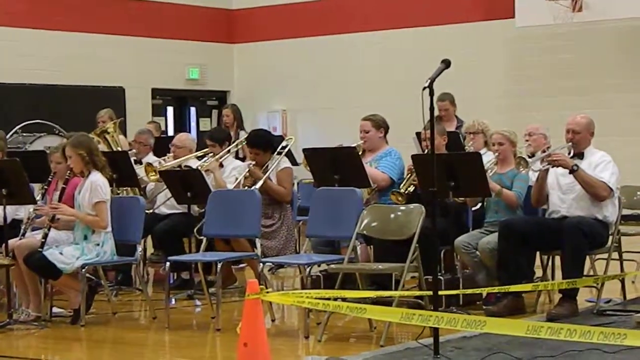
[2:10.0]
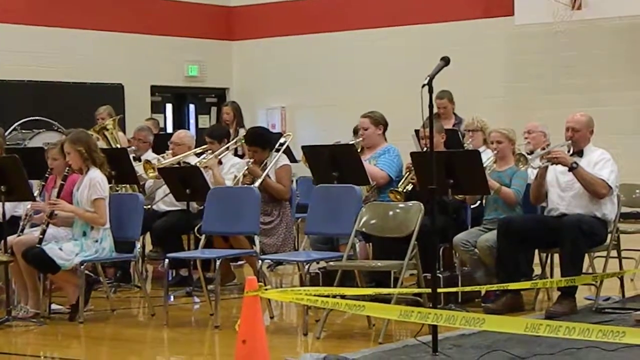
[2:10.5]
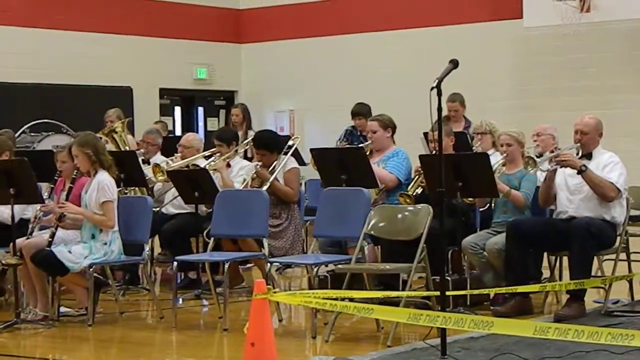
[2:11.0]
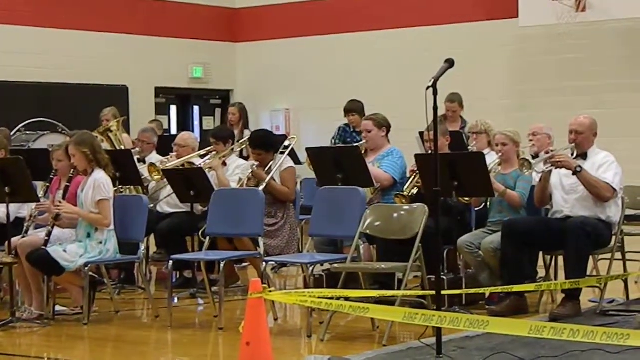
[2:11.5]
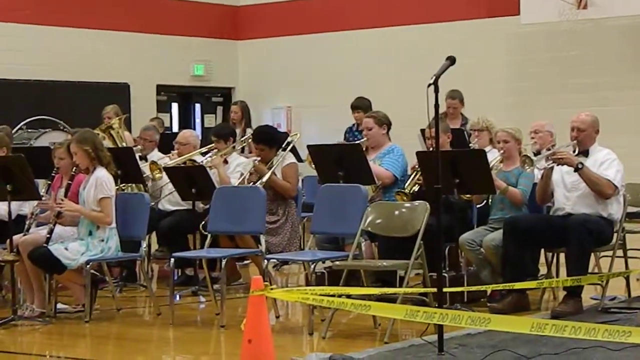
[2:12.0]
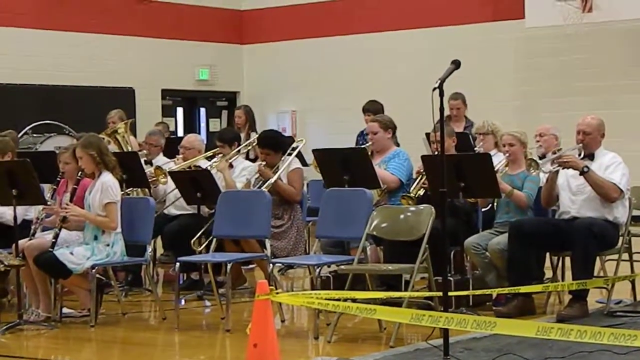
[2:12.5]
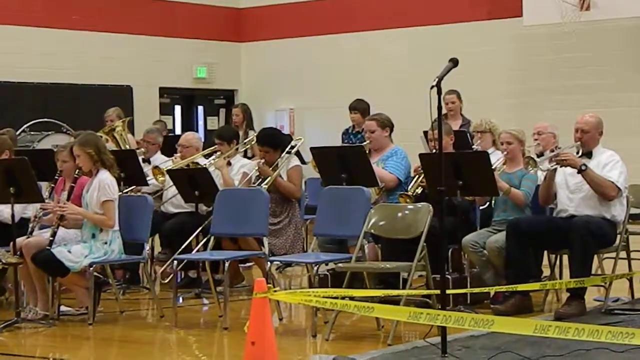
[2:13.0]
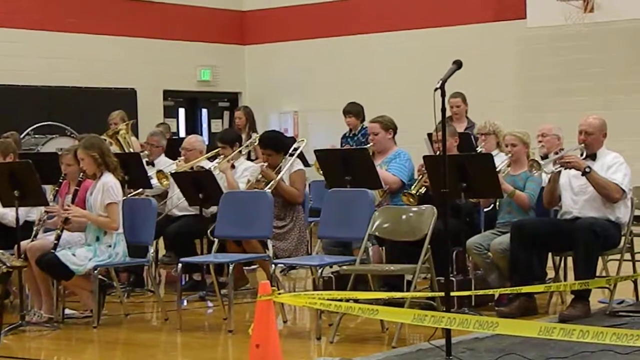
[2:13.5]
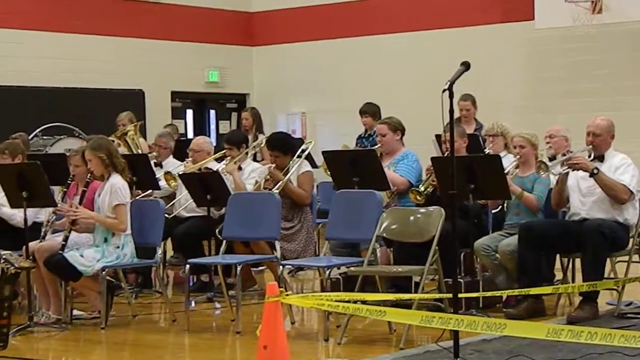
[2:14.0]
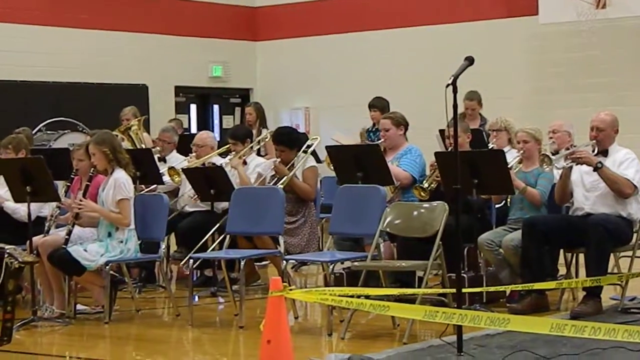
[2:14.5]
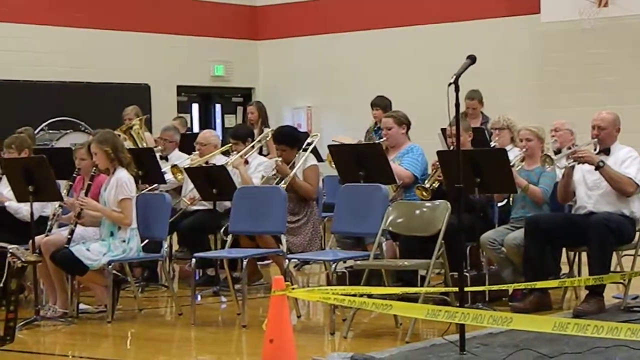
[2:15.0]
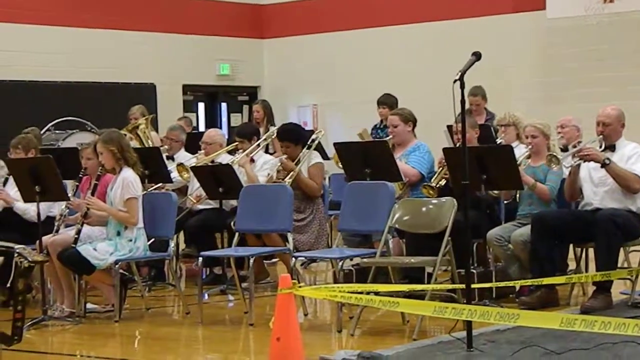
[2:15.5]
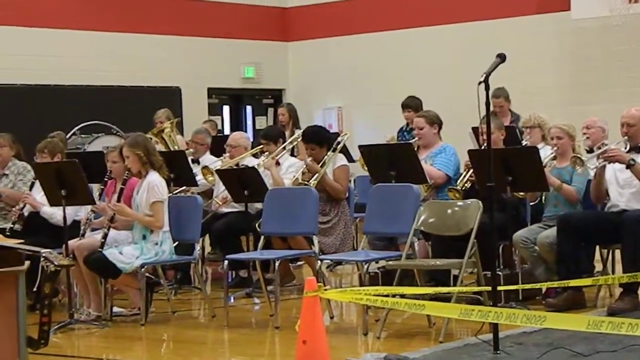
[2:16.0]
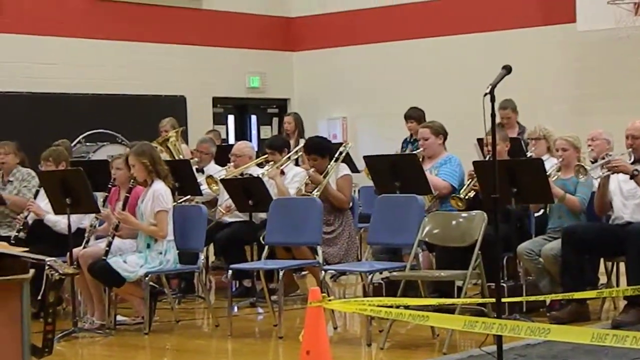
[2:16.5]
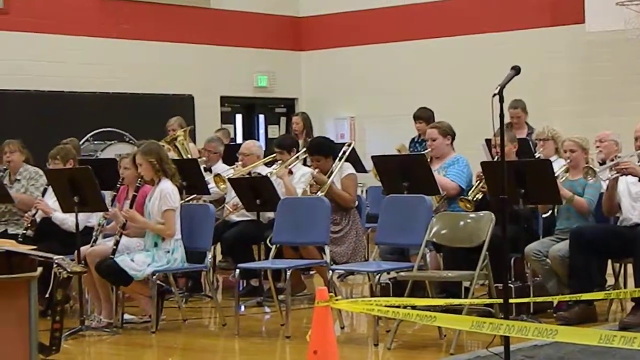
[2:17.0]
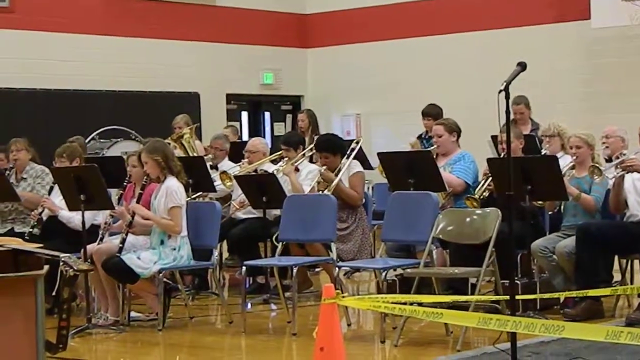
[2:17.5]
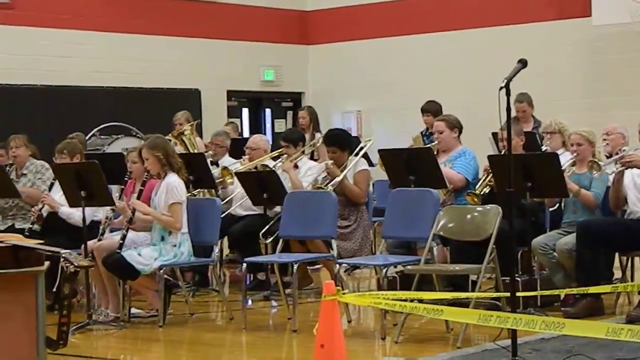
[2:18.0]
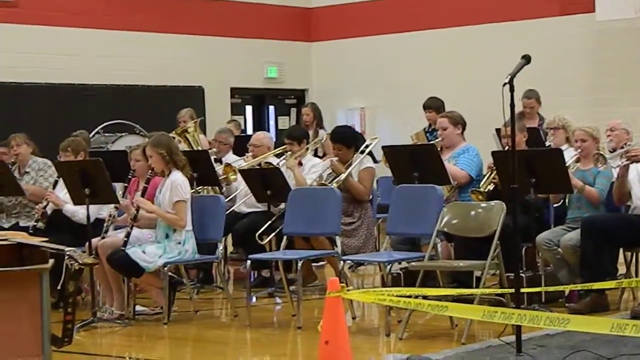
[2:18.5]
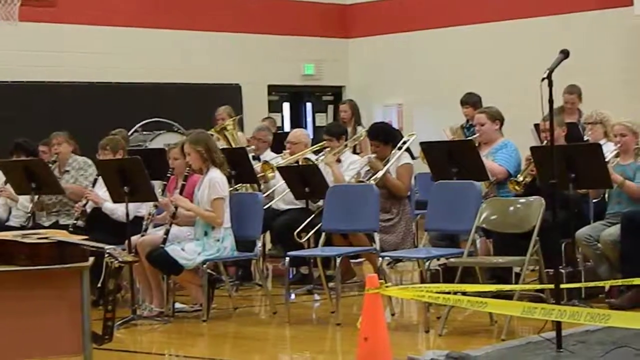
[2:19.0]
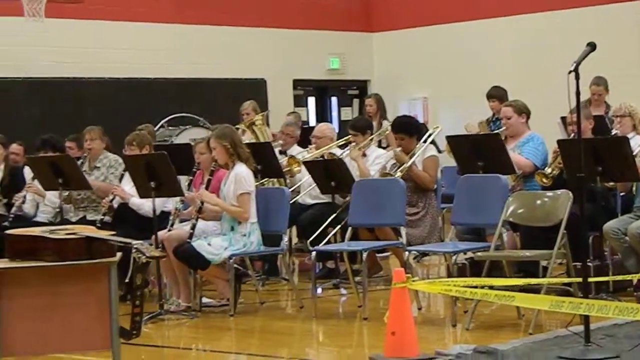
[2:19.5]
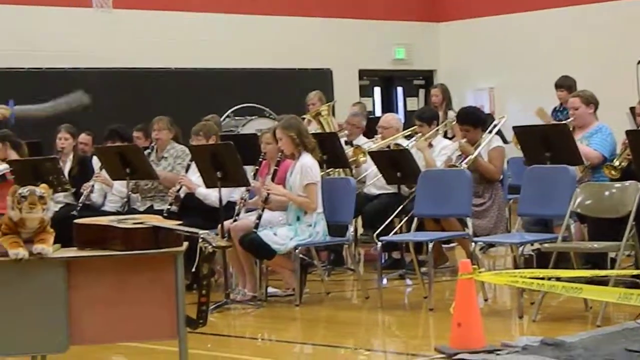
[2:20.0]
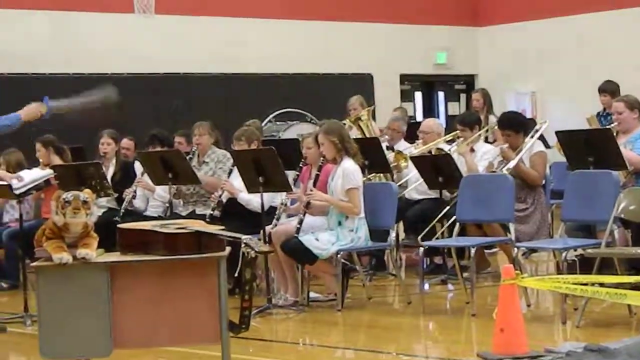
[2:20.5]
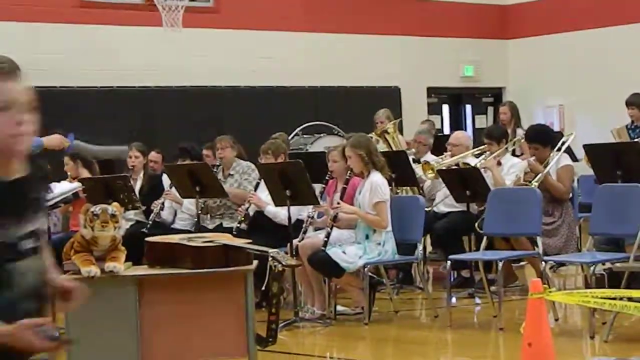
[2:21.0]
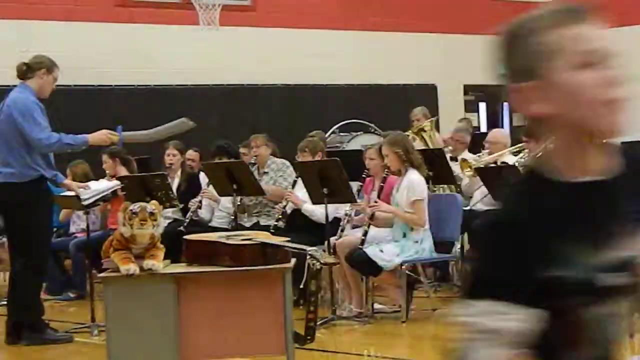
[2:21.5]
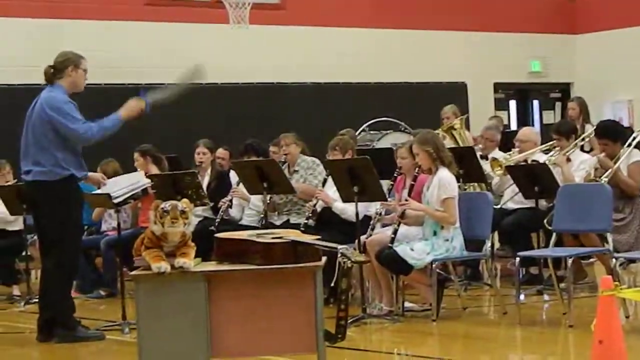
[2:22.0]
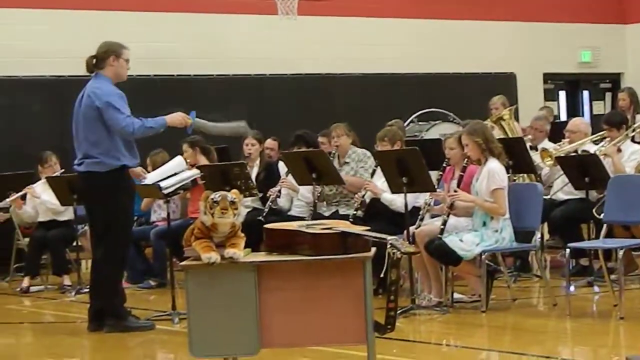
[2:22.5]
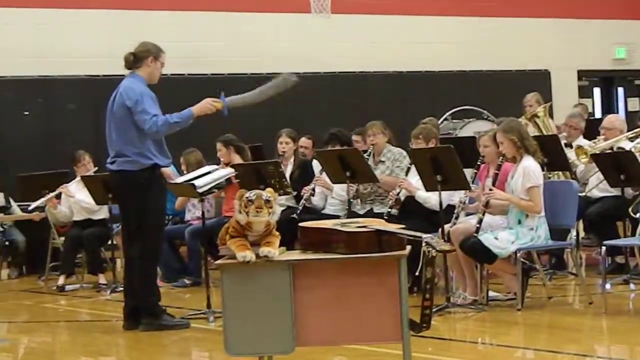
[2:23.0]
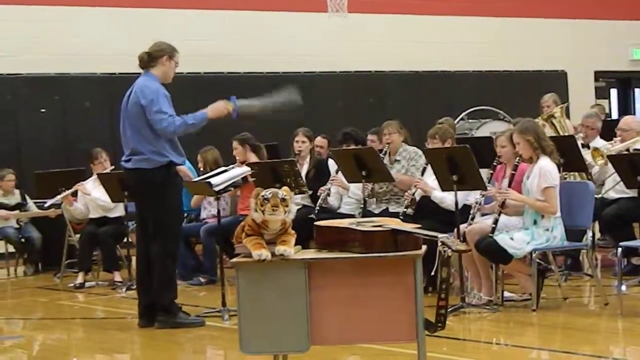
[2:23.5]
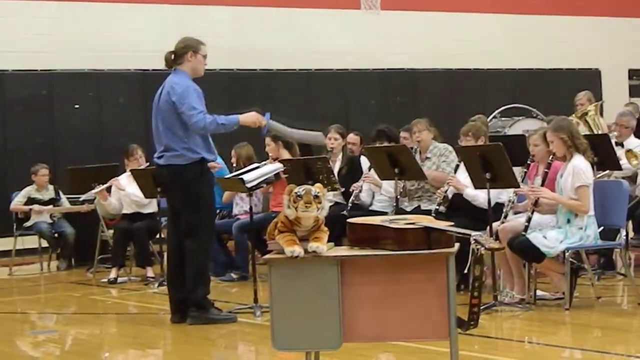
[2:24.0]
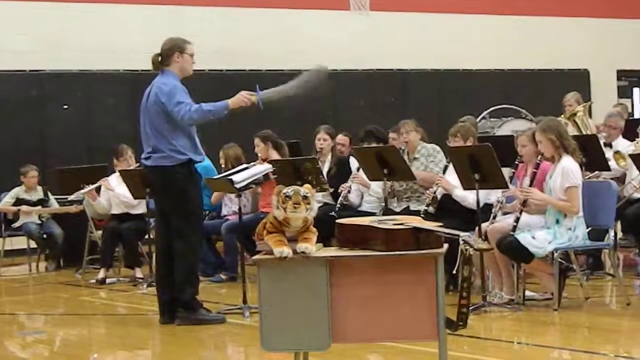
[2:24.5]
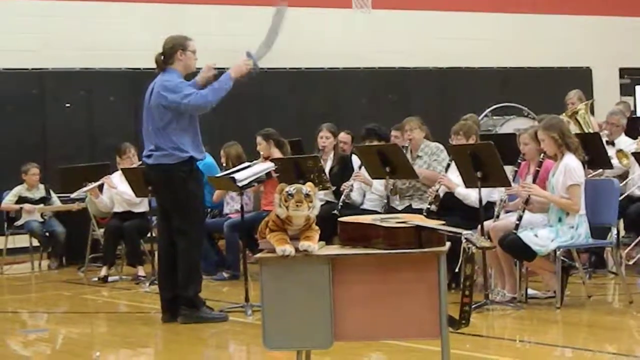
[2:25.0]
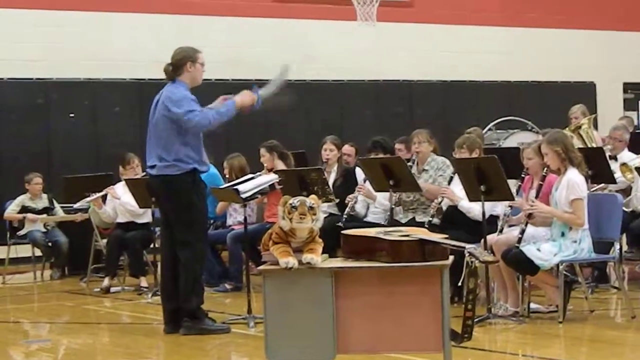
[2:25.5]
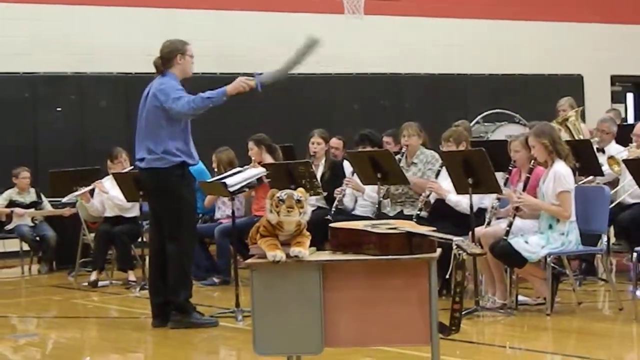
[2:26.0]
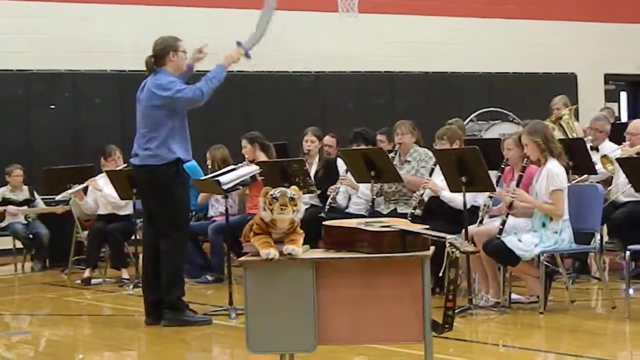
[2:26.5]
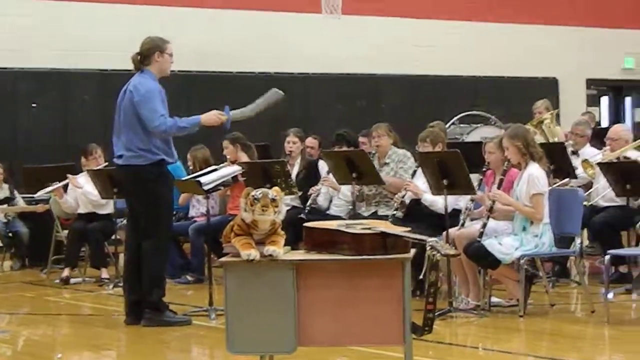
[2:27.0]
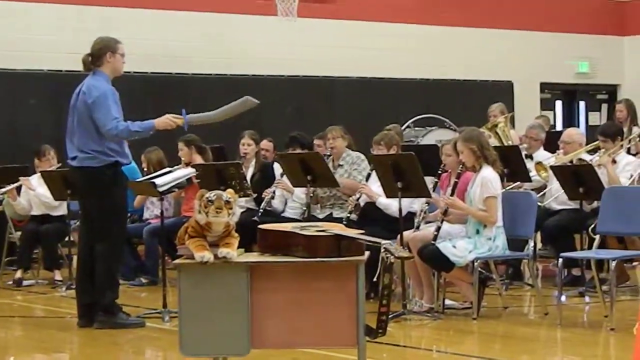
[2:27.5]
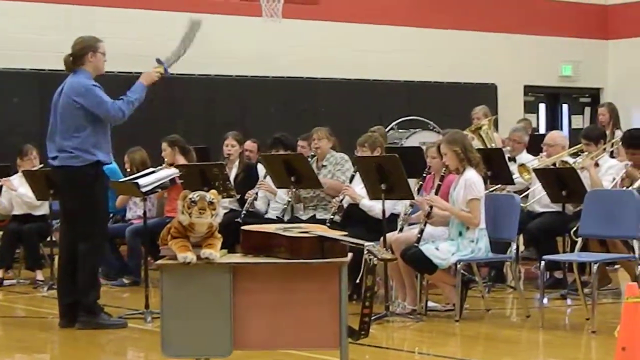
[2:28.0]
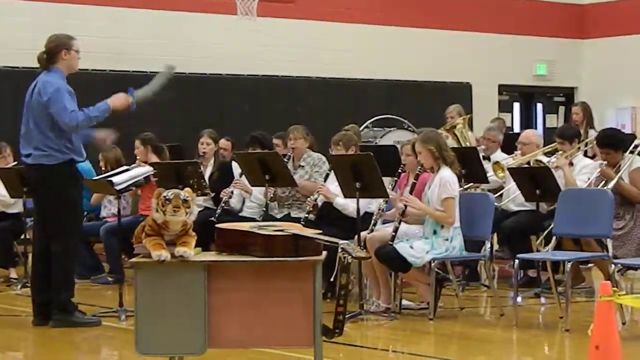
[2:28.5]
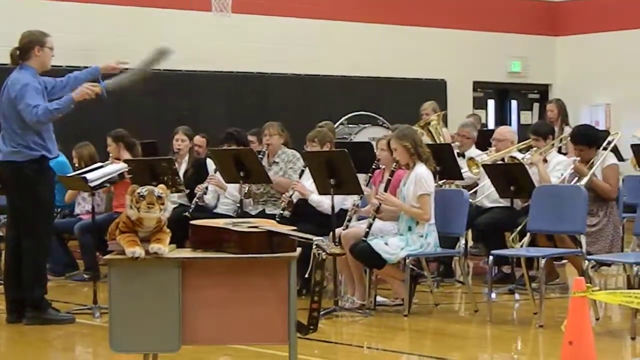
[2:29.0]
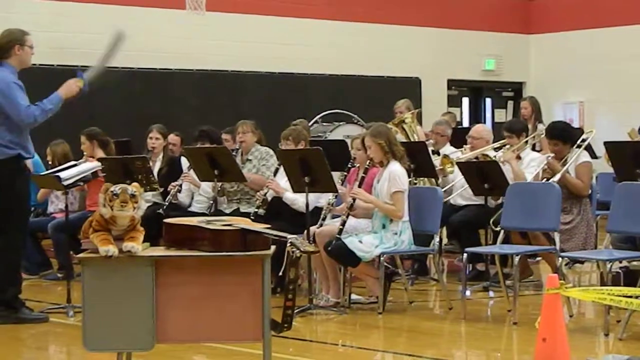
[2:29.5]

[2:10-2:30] A band continues performing, seated in chairs behind music stands in a school gymnasium. At first the camera focuses on the brass players in the back: some blow trumpets, and there is a tuba in the very back. As the camera pans over, musicians toward the front are seated playing clarinets and a flute. At the very front is the conductor, wearing a long-sleeved blue shirt and black pants and holding a plastic toy sword as a conductor's baton. He has a podium in front of him with sheets of music, which he turns at one point. His hair is pulled back in a ponytail and he wears glasses. At one point a young boy wearing a black shirt runs in front of the camera. The gymnasium walls are yellow with a red stripe around the top, basketball hoops hang from two of the walls, and doors with an exit sign above them lead out of the gymnasium behind the band.